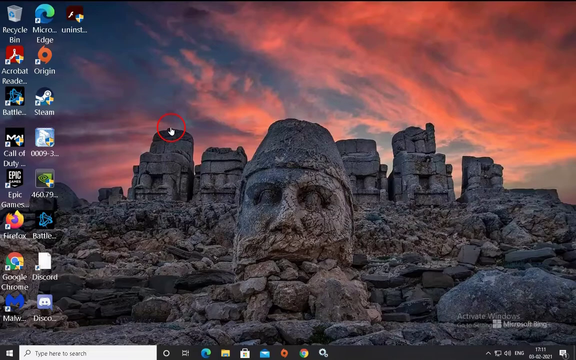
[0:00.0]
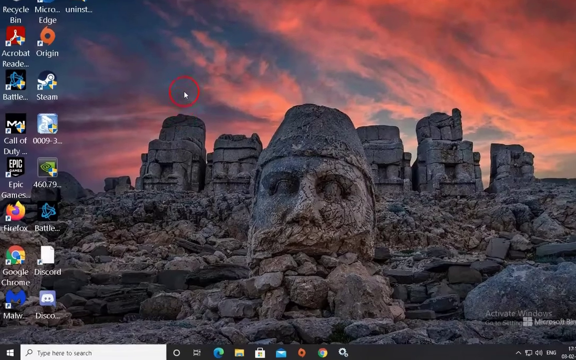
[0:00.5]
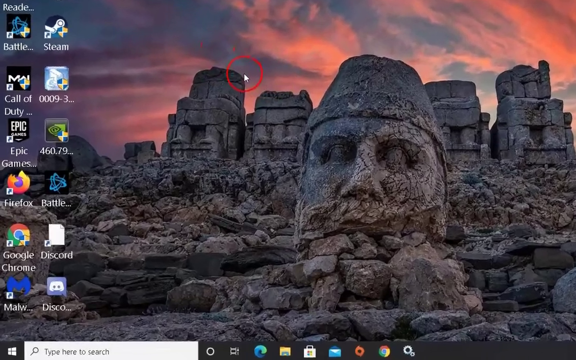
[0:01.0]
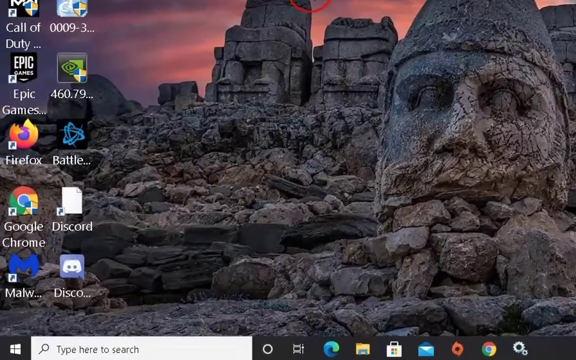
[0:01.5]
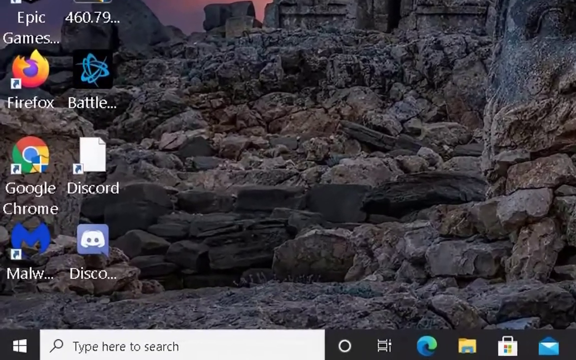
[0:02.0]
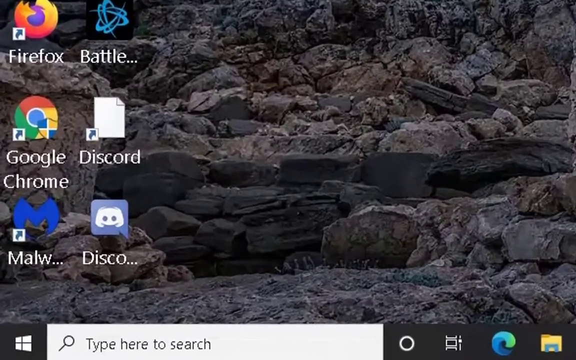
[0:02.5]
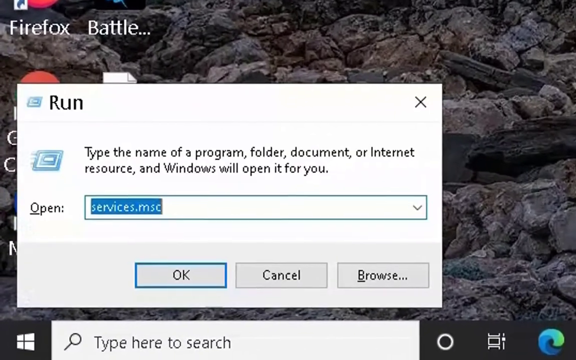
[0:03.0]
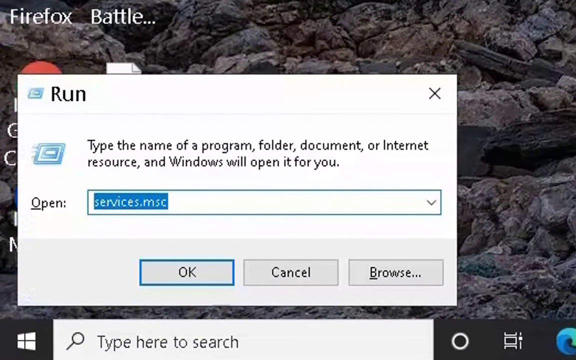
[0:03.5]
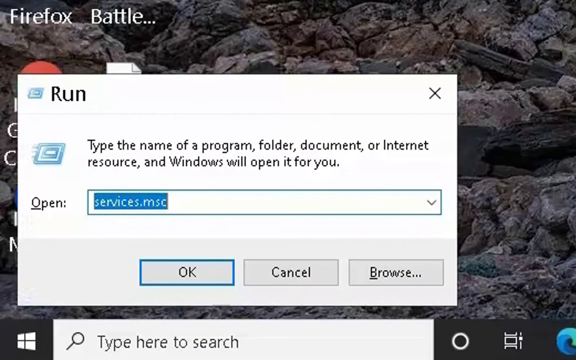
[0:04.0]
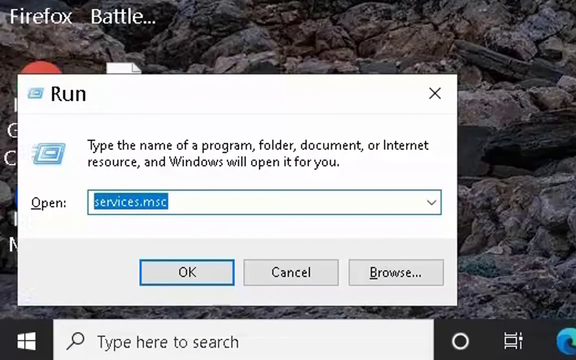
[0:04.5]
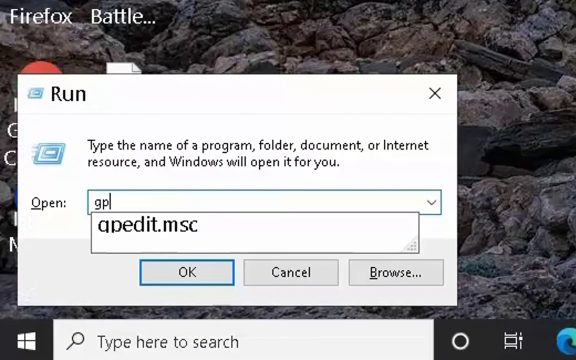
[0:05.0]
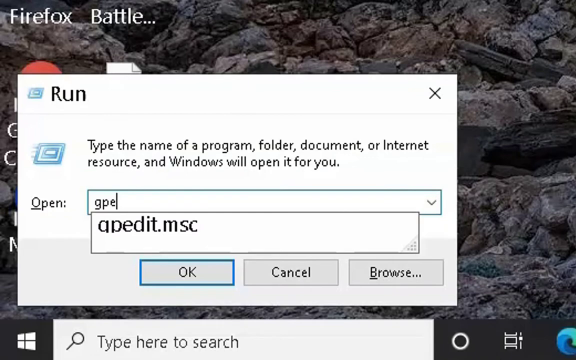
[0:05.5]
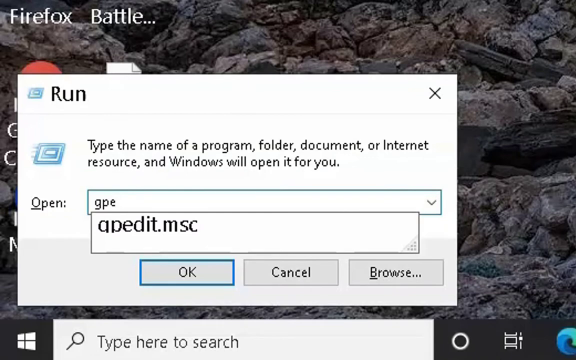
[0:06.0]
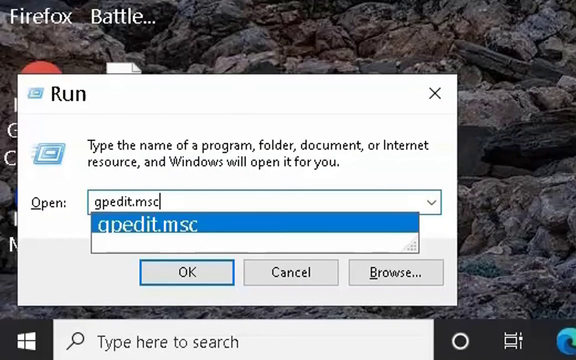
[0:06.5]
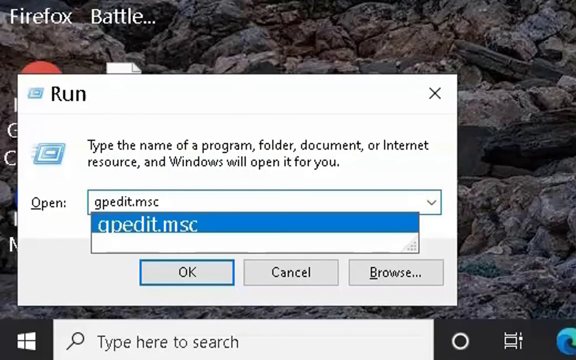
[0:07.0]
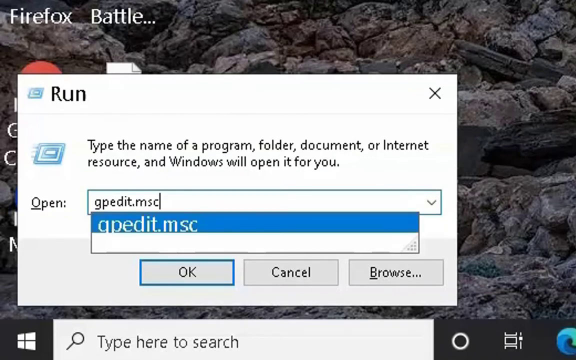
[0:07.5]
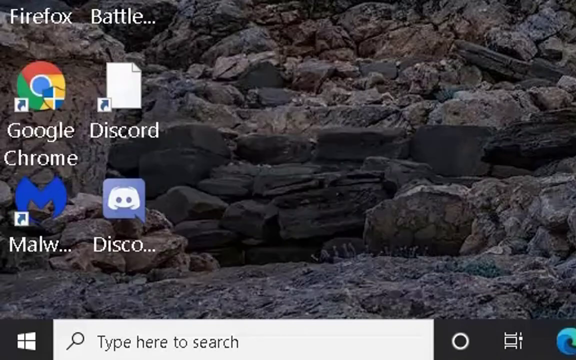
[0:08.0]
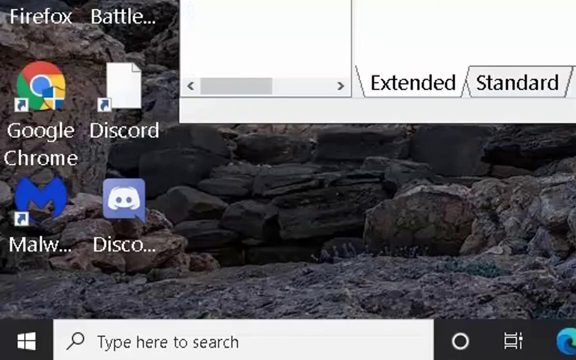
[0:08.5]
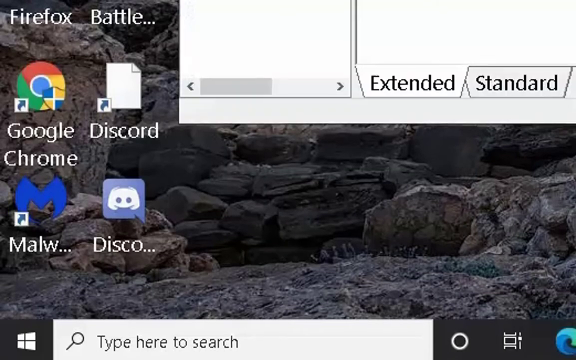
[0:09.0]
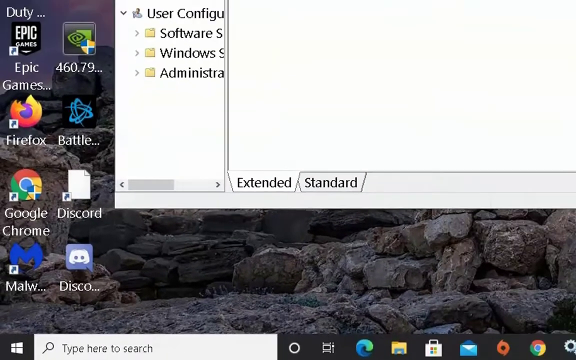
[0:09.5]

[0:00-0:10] The background is a sky with pink and blue clouds, and it looks like the sun is just setting or just rising. The scene is full of gray rocks, small and large, stacked on top of each other so that they look like they form buildings; it looks kind of like the remains of a very ancient city, and like a place where someone would climb. There is a very large, ancient-looking statue of a man made out of rocks, wearing some type of hat; his eyes, nose and mouth are just kind of rocks. The image may be wallpaper on a computer: this is a computer screen with tabs to click on. It looks like somebody is using it, and the screen shows "Type the name of a program." The screen appears to be doing some photoshopping or maybe changing aspects of the scene.